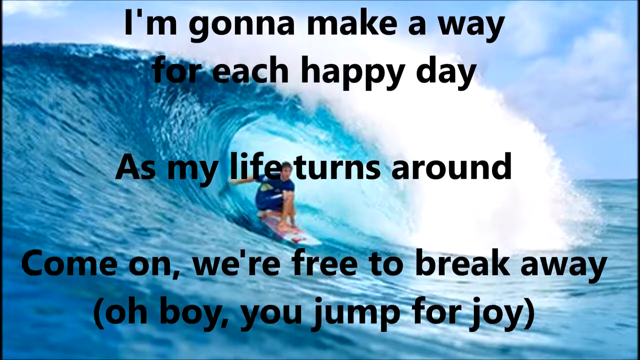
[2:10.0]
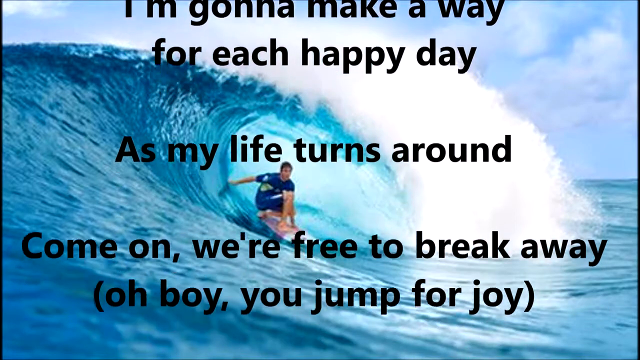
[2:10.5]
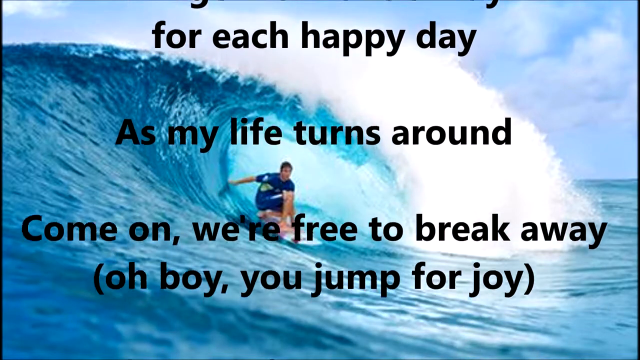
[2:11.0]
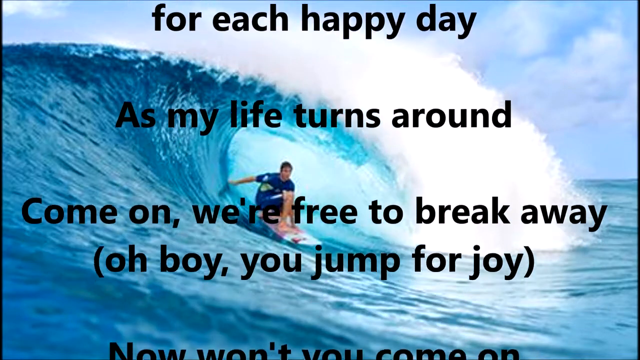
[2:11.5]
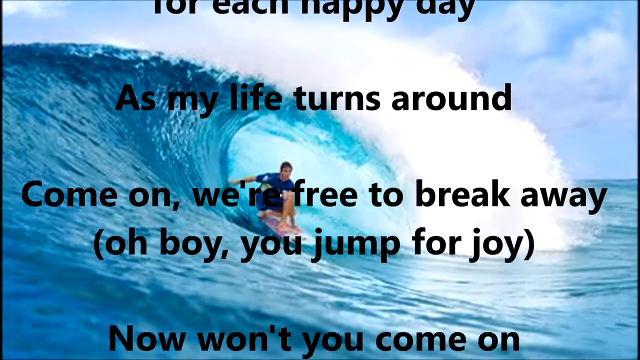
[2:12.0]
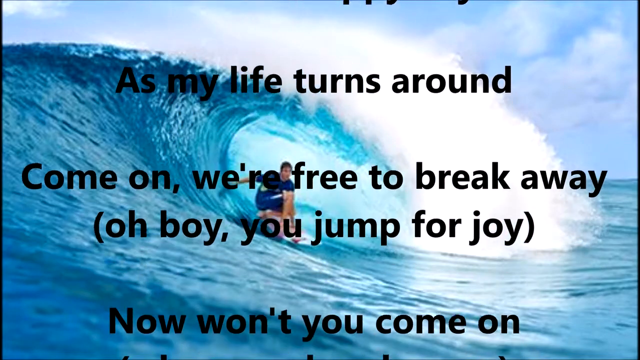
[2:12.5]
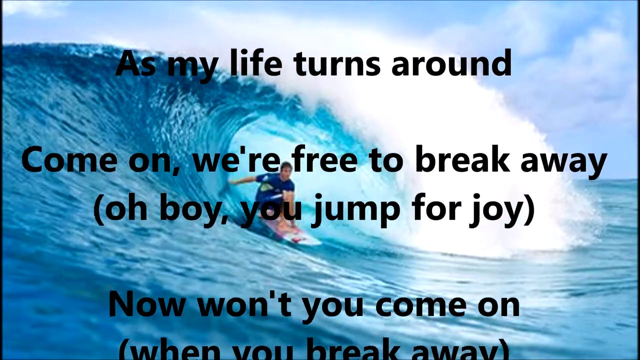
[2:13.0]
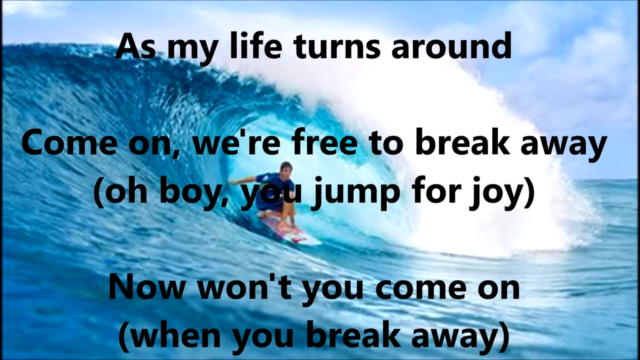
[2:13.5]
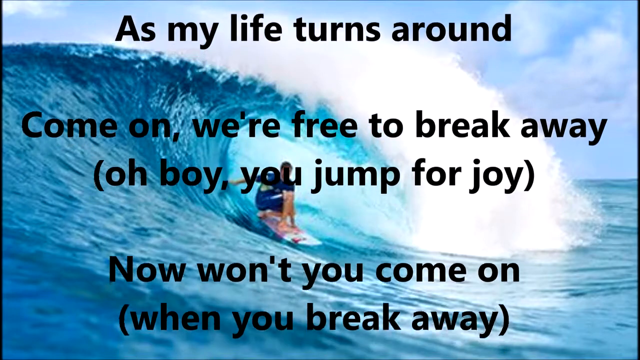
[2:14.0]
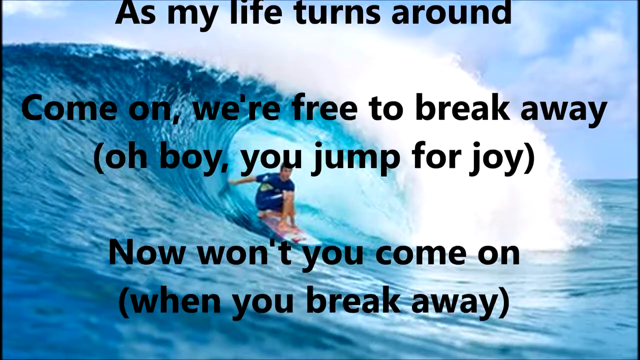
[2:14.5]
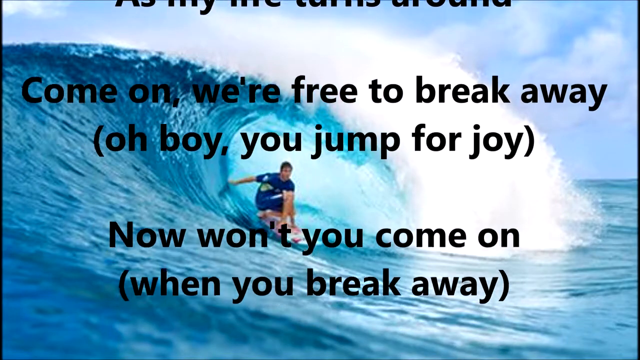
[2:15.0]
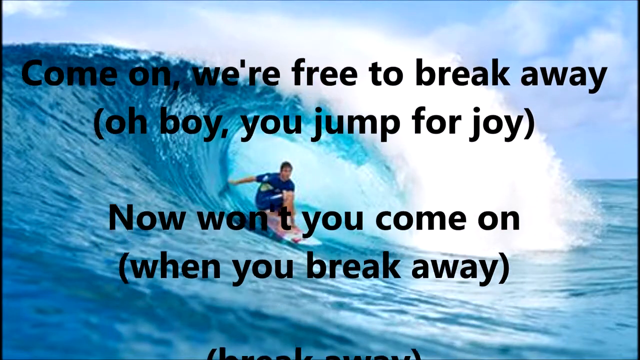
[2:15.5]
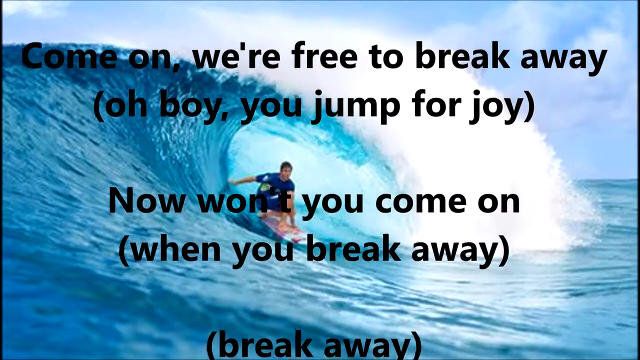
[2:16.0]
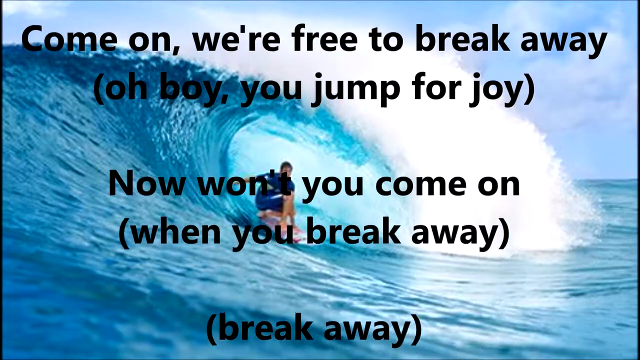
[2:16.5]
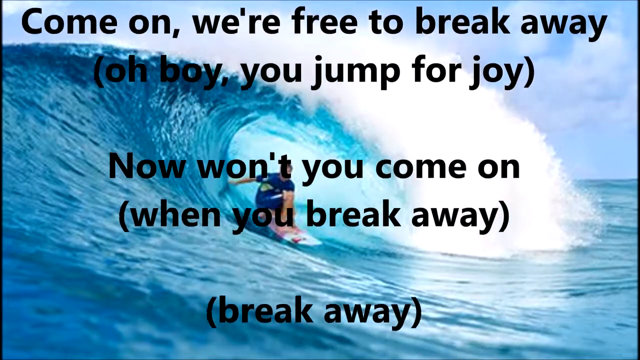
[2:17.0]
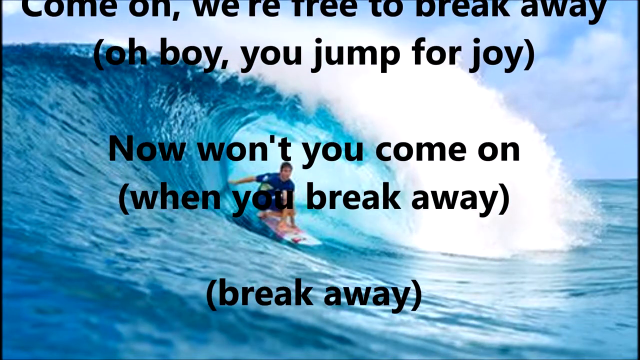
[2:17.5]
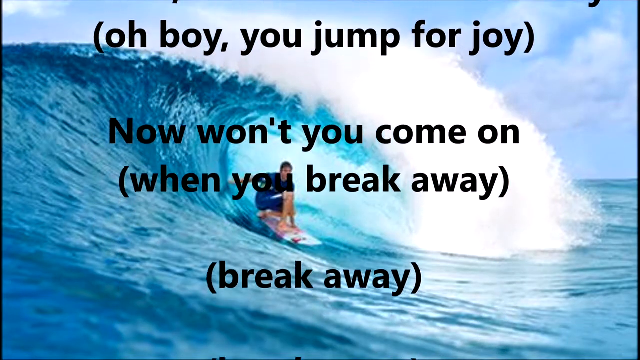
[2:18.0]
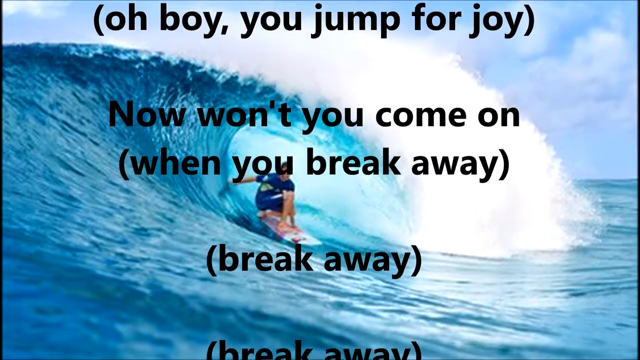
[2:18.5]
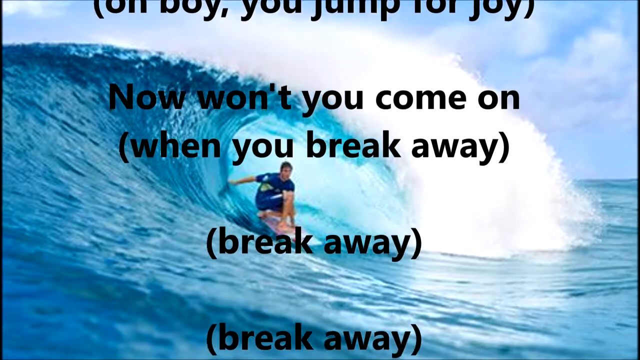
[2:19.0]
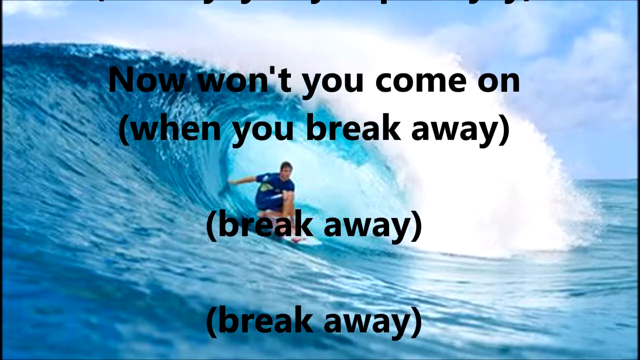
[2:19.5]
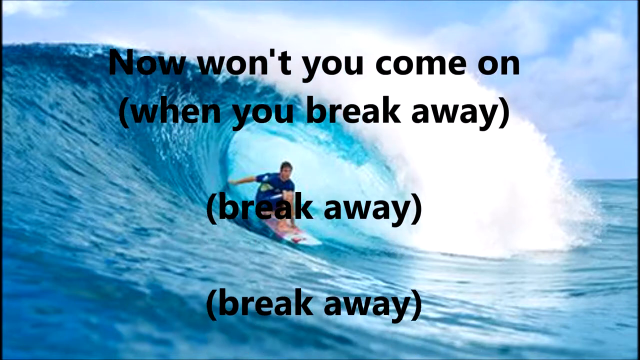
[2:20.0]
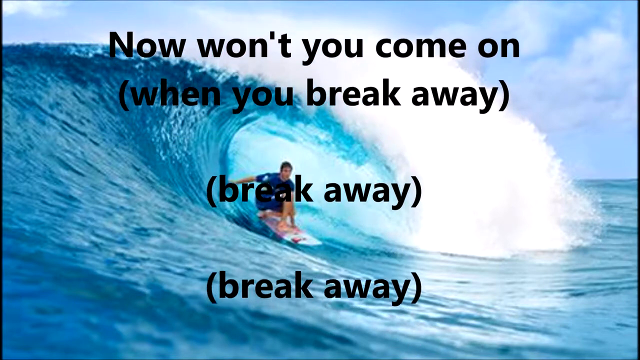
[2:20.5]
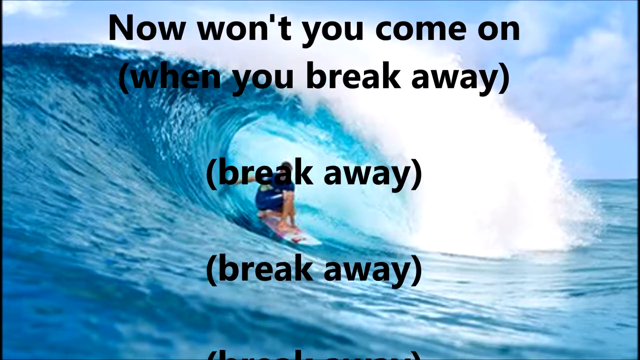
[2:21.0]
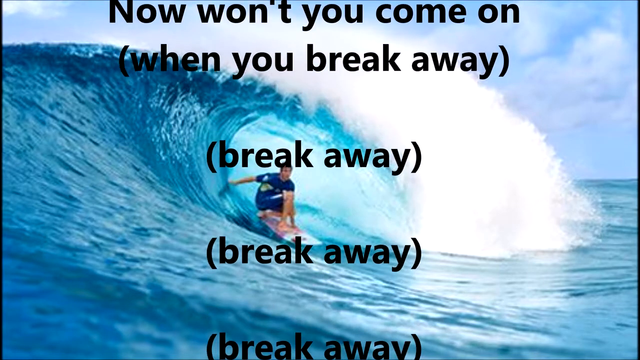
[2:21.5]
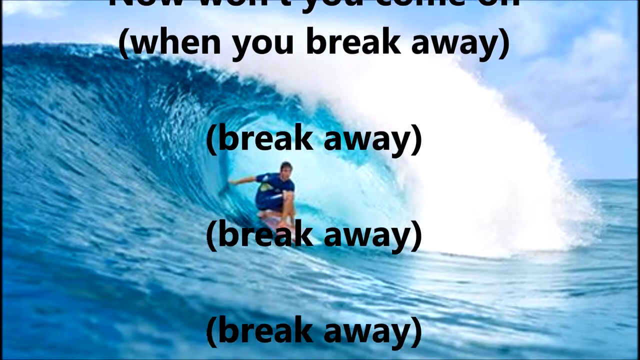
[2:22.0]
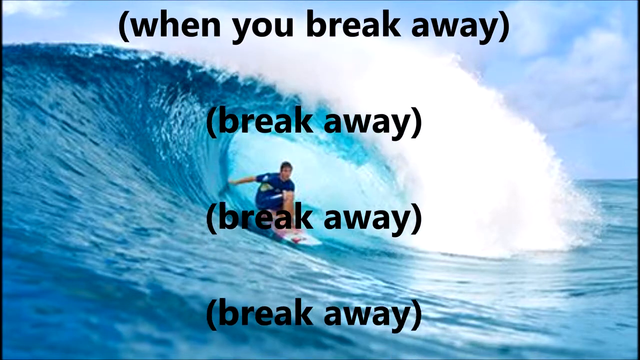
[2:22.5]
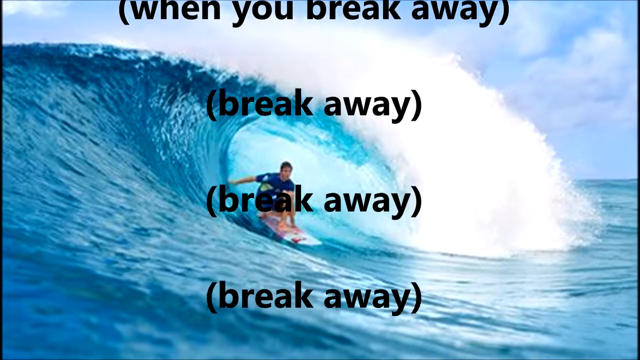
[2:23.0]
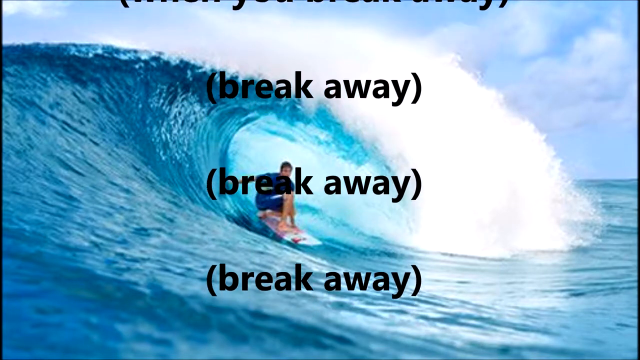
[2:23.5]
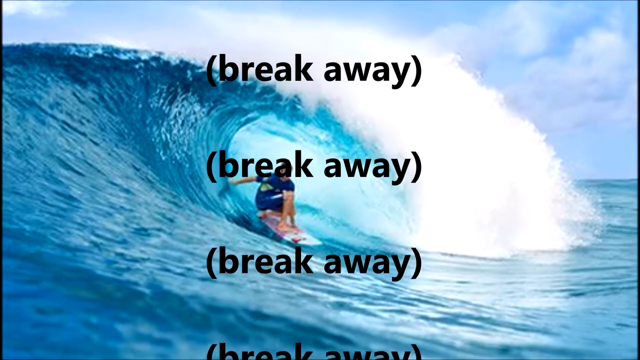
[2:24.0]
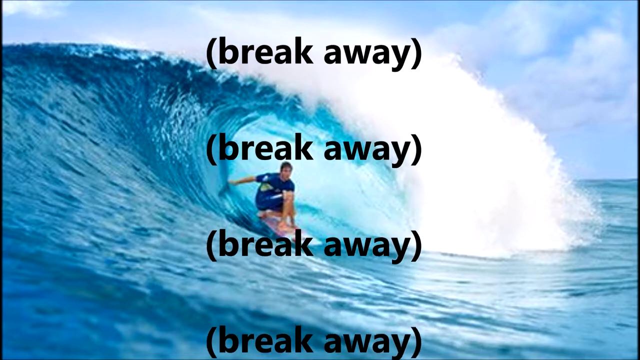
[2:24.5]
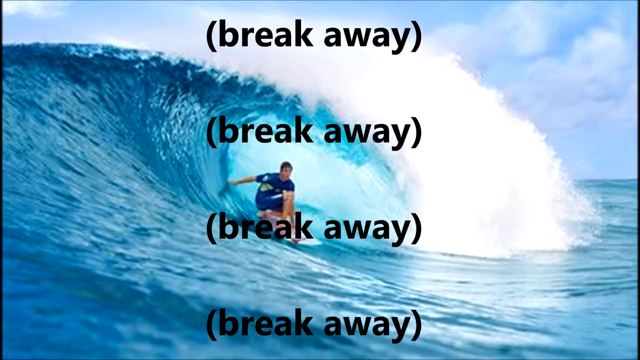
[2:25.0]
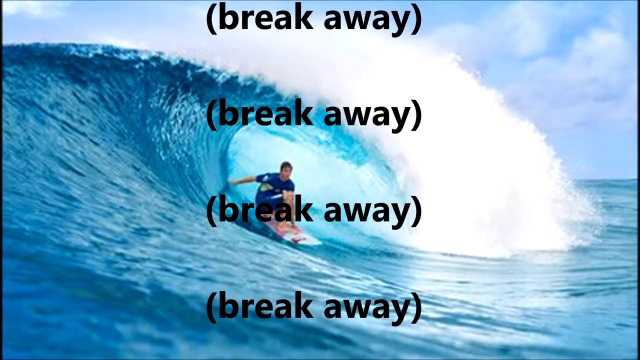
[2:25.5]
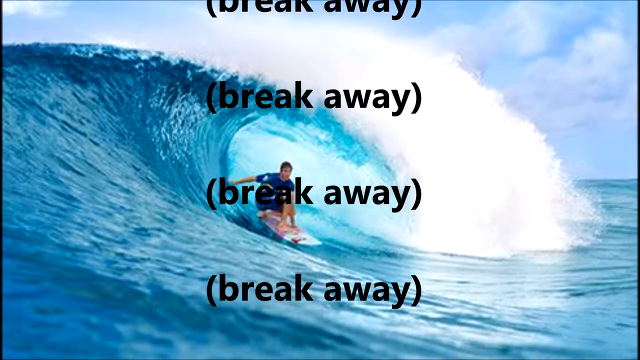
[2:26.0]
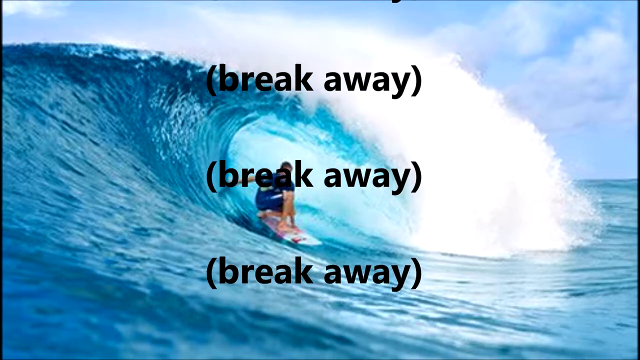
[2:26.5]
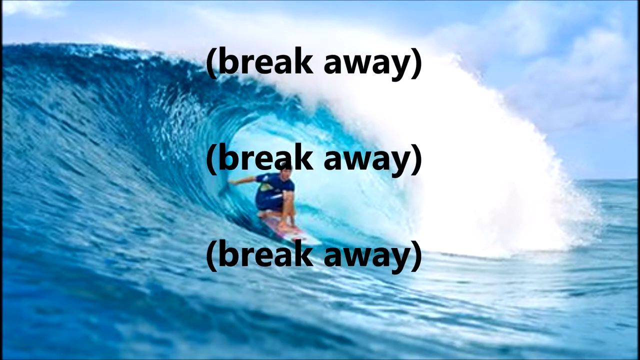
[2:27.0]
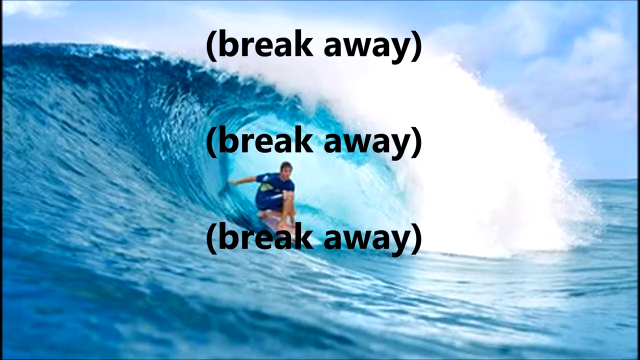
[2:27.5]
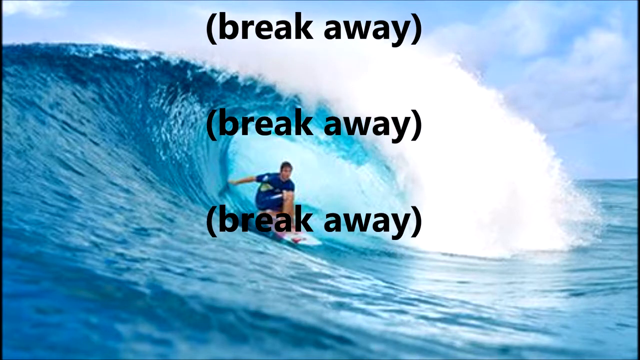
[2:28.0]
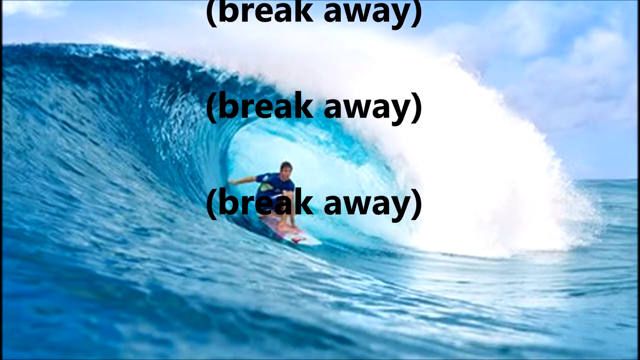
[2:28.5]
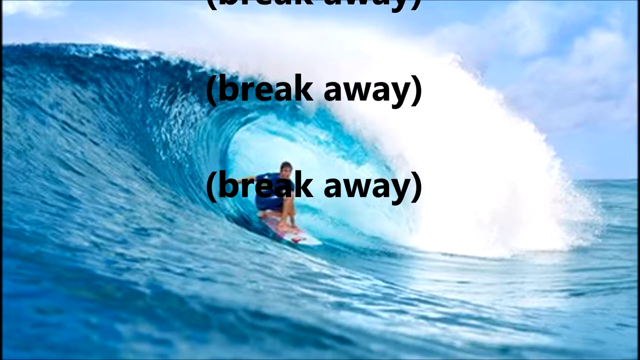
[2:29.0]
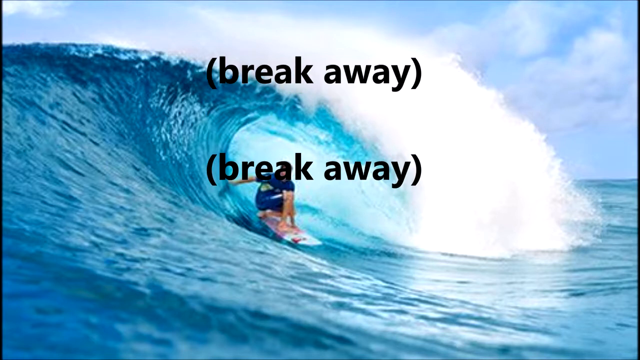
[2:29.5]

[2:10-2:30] The next lyrics read "now won't you come on," then "when you break away" in parentheses, then "break away" in parentheses, and "break away, break away, break away," all in parentheses. Then there appears to be possibly another break in the lyrics, or the song is coming to its end. No artist name, songwriter, or production information appears, and there is no context given for the image. The image does not fully fit the screen on each side, leaving a really thin sliver of black border around it. The image is also slightly fuzzy, seemingly a little older.